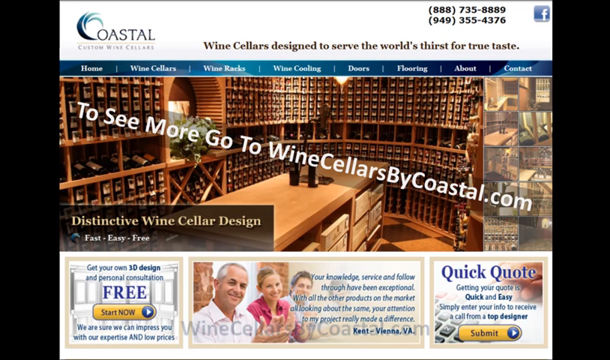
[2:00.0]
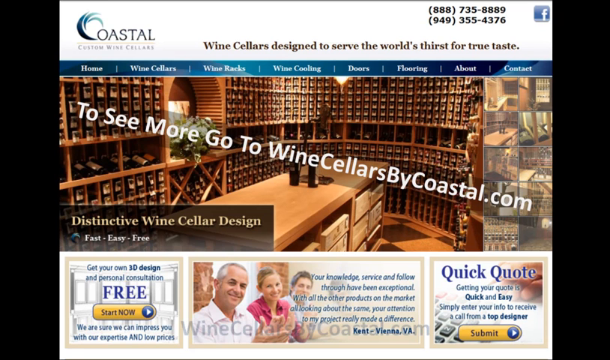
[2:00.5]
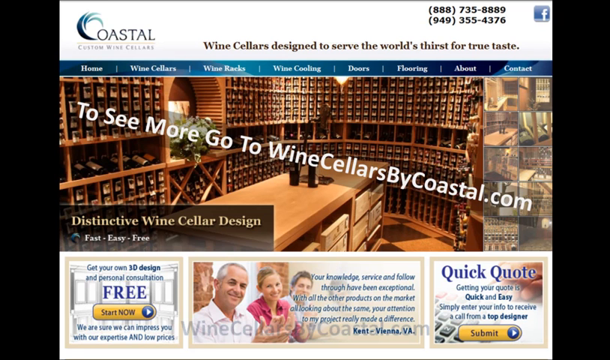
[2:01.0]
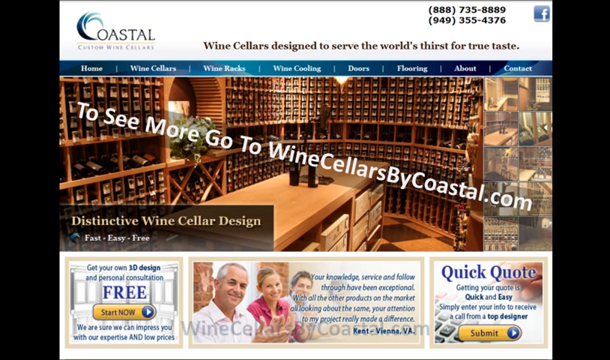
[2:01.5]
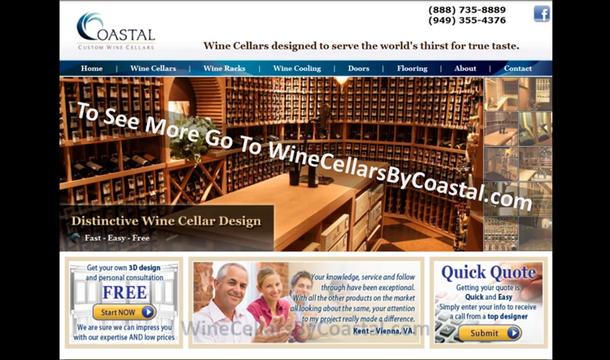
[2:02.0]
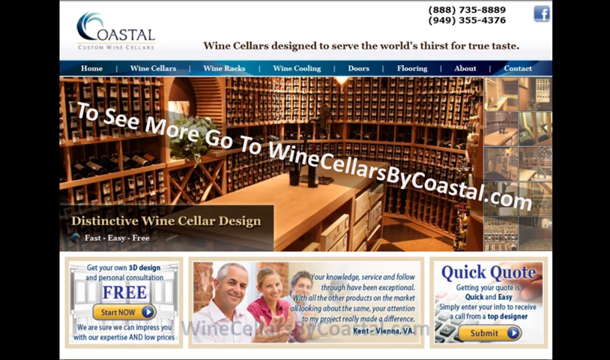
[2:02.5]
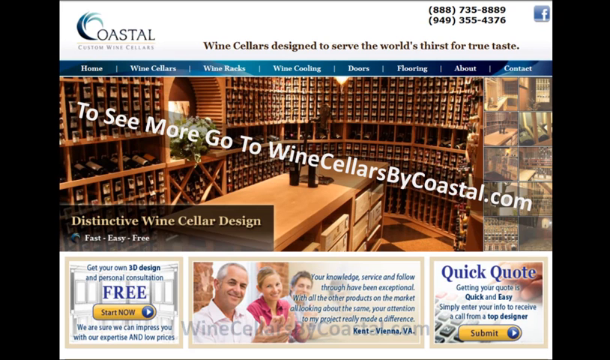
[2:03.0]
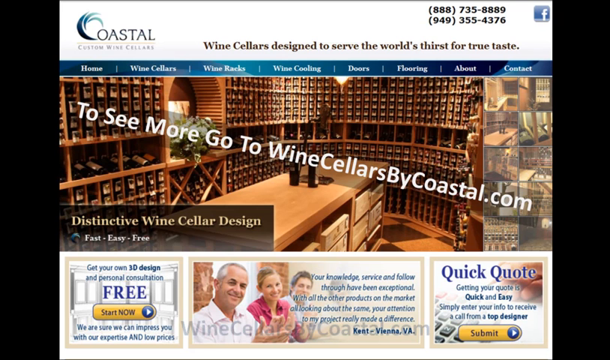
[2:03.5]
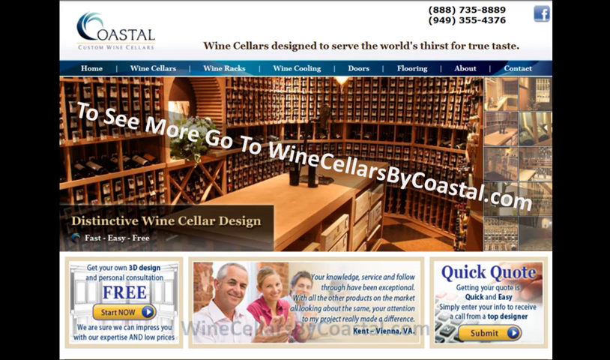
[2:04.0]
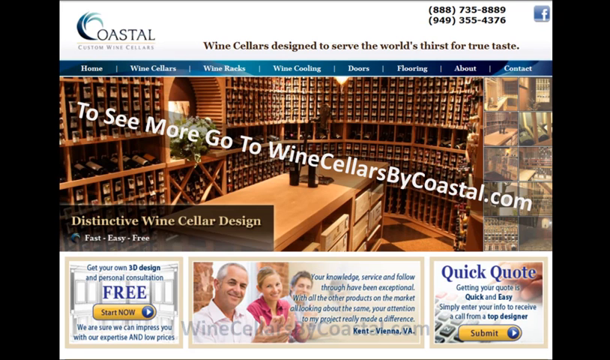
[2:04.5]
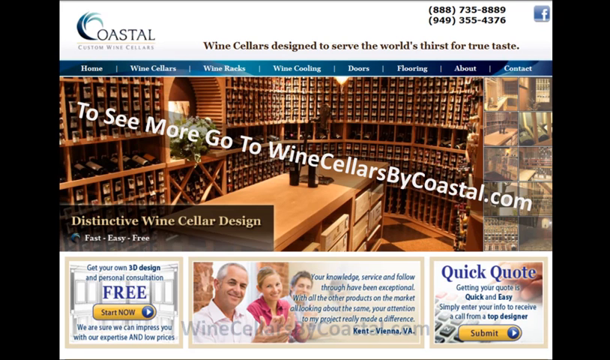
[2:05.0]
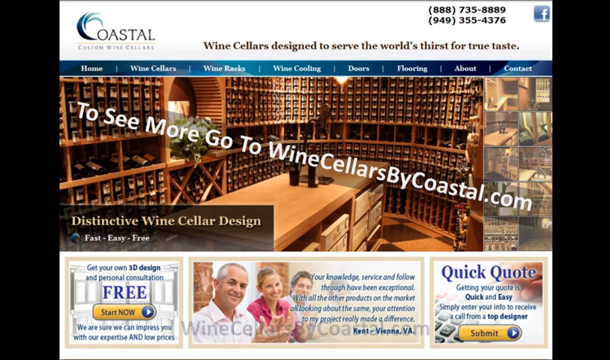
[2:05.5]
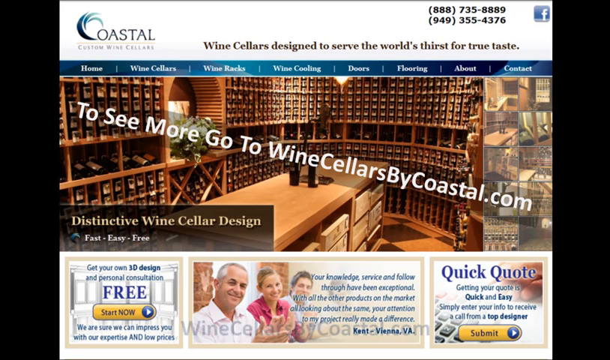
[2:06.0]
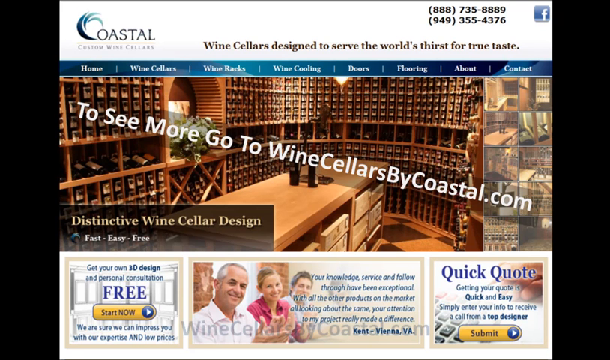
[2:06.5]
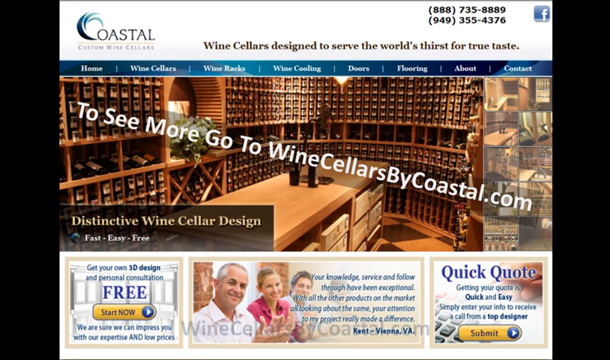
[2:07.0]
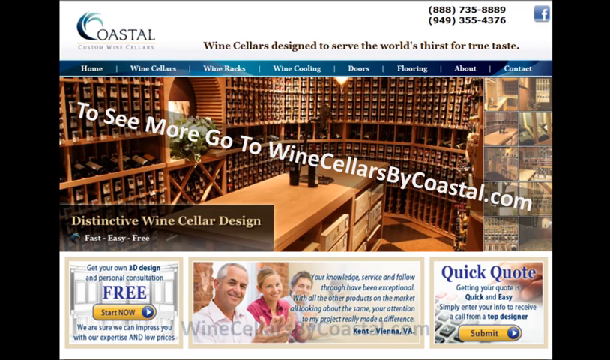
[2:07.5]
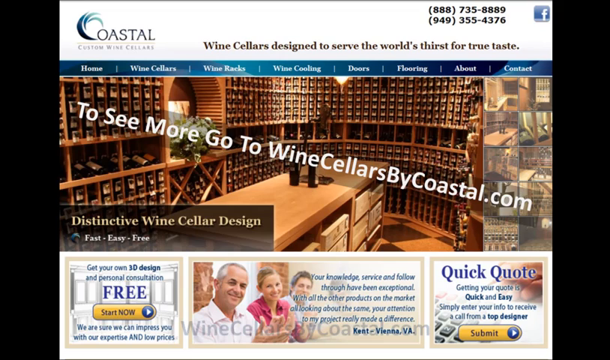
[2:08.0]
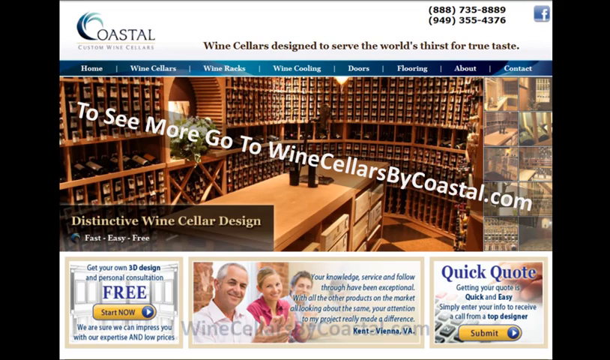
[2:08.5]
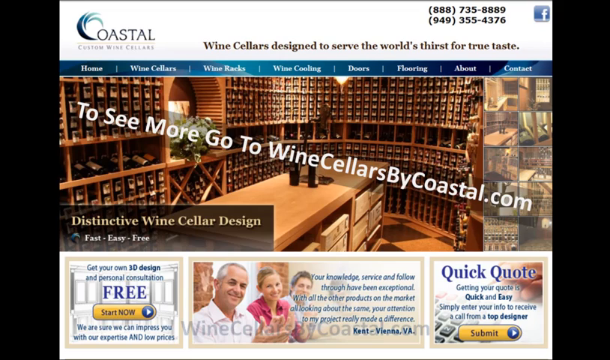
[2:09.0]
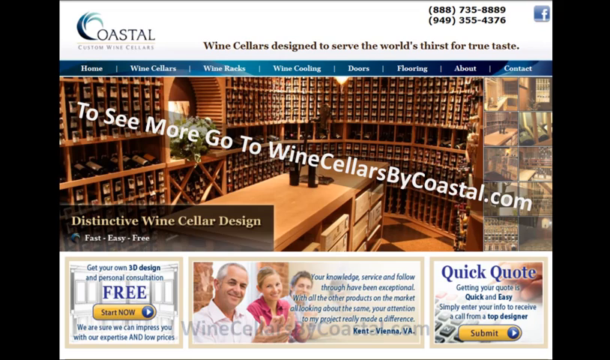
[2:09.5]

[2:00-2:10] The website for Coastal, a custom wine cellar company, shows a featured image that looks like a small wine cellar with walls of shelves with little compartments for wine bottles. White text running diagonally across the screen reads "to see more, go to winecellarsbycoastal.com". Toward the top right corner, in the white heading box, is the phone number in black with a Facebook logo next to it, and a tagline reads "wine cellars designed to serve the world's thirst for true taste". Toward the bottom of the screen are small boxes with text about getting a quick quote and getting a free 3D design and personal consultation, with call to action buttons such as start now and submit. Also toward the bottom is a longer rectangular image of two men and one woman smiling, with a testimonial from happy clients written on it.